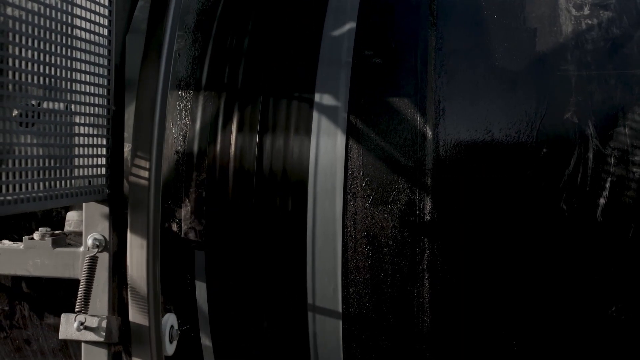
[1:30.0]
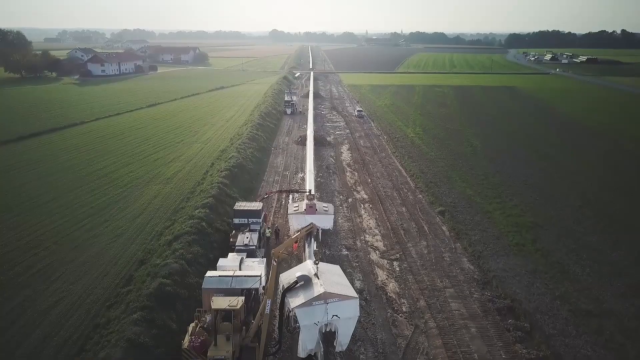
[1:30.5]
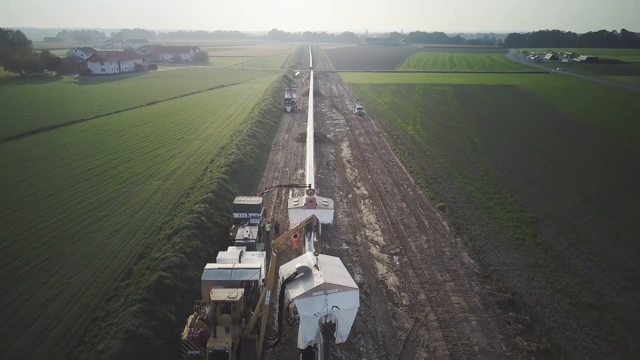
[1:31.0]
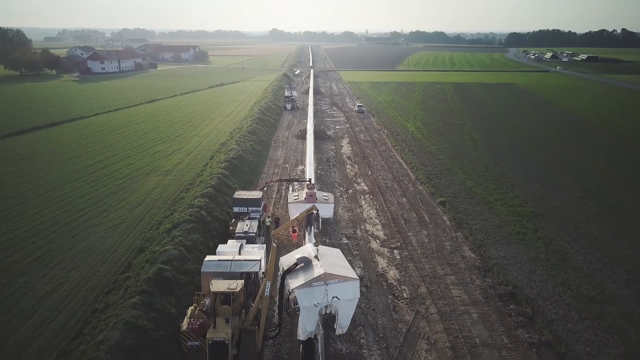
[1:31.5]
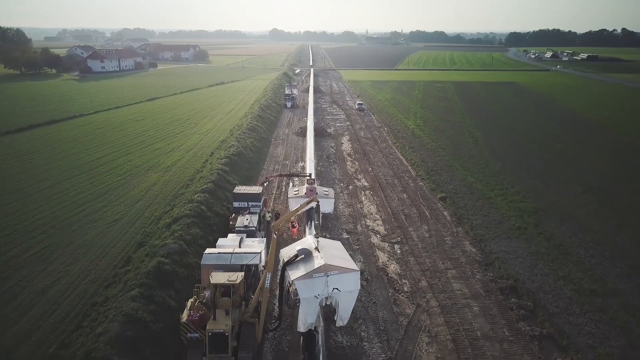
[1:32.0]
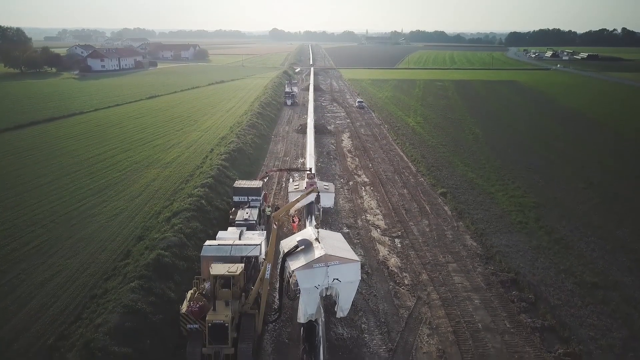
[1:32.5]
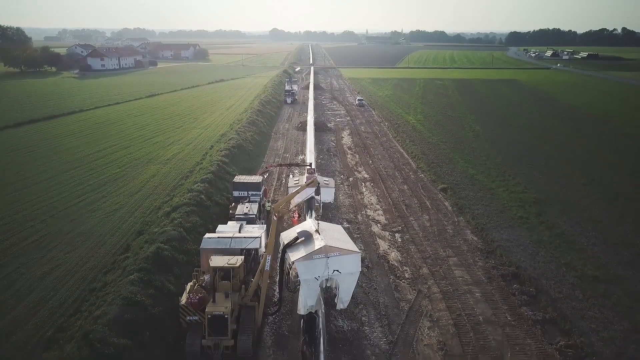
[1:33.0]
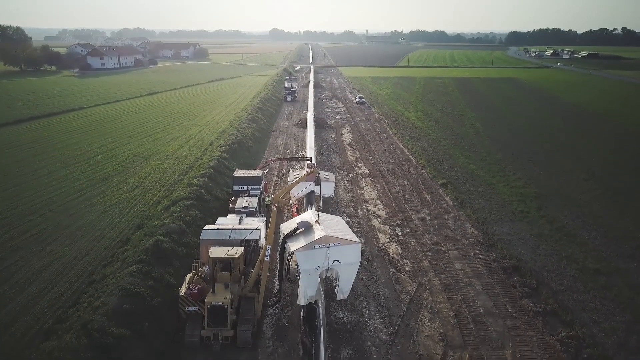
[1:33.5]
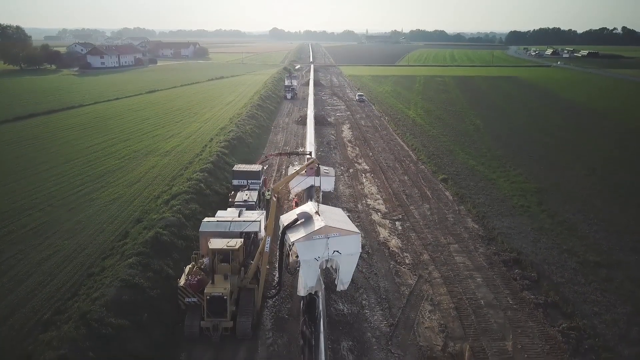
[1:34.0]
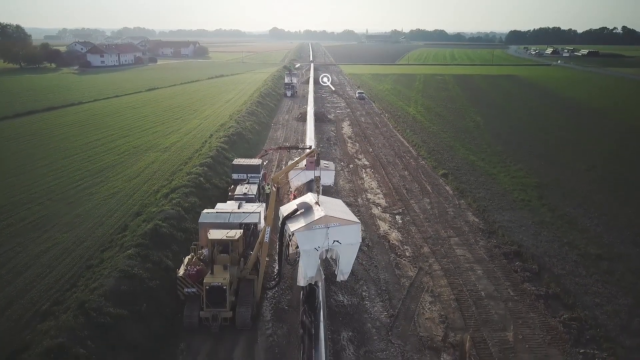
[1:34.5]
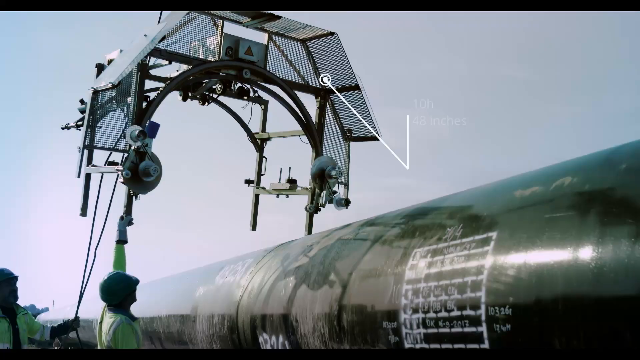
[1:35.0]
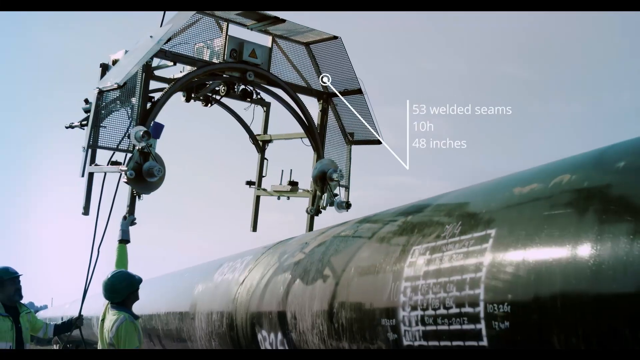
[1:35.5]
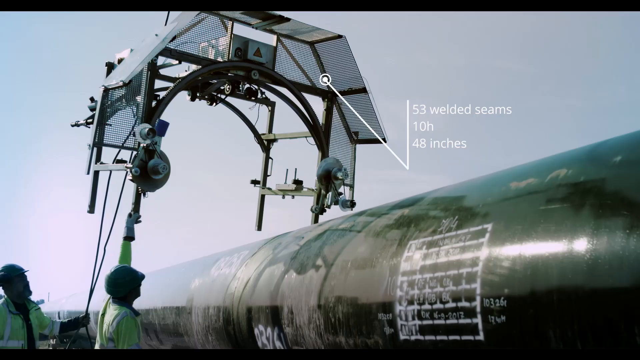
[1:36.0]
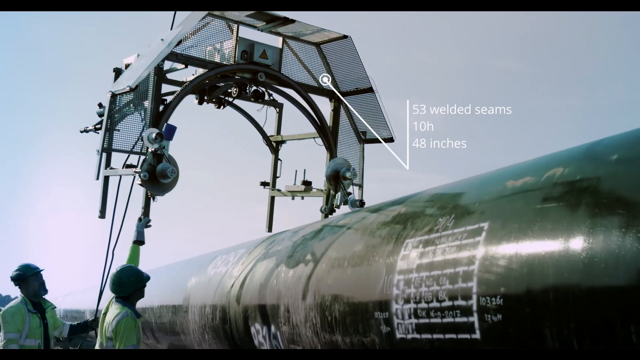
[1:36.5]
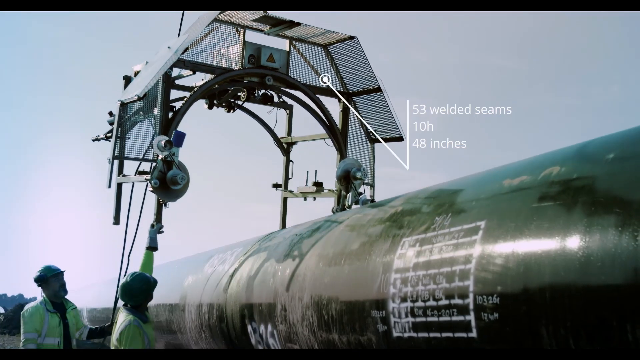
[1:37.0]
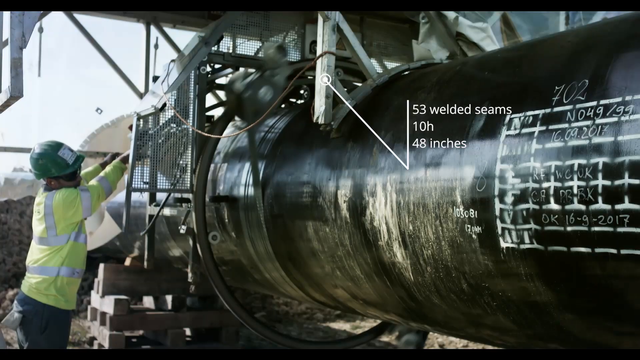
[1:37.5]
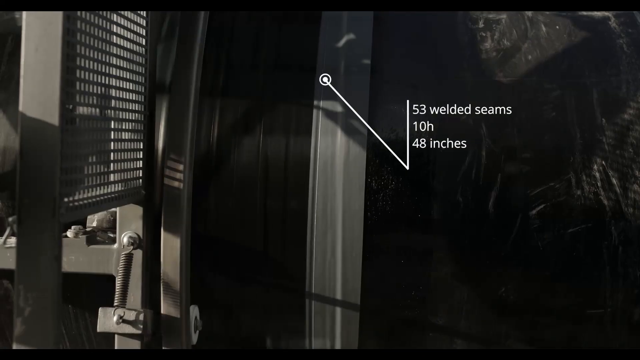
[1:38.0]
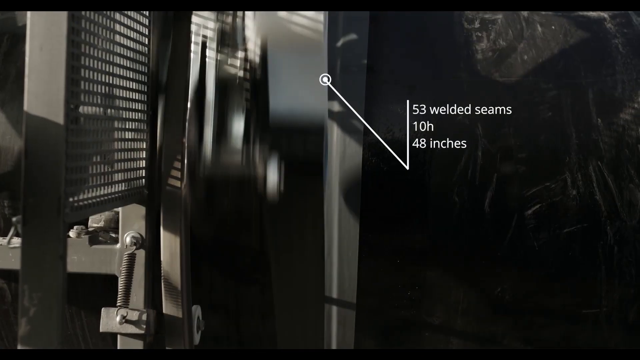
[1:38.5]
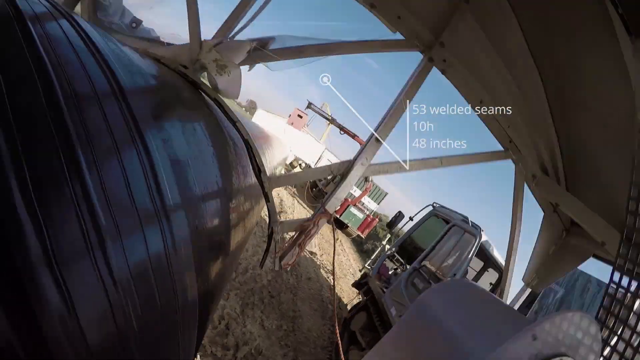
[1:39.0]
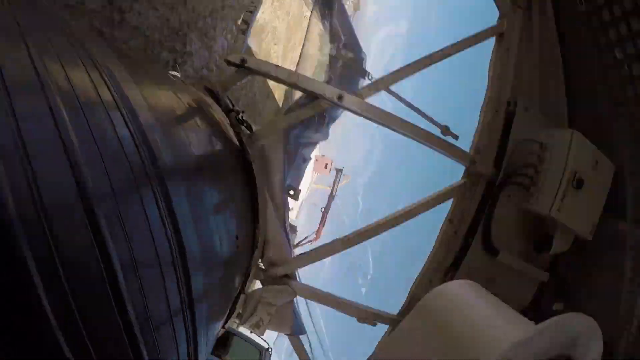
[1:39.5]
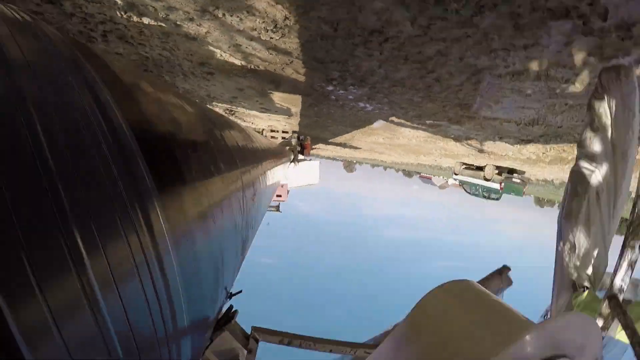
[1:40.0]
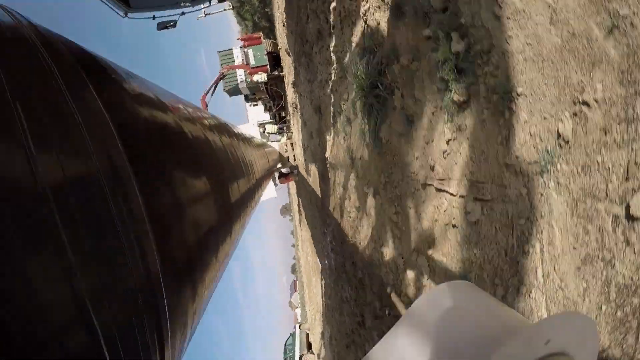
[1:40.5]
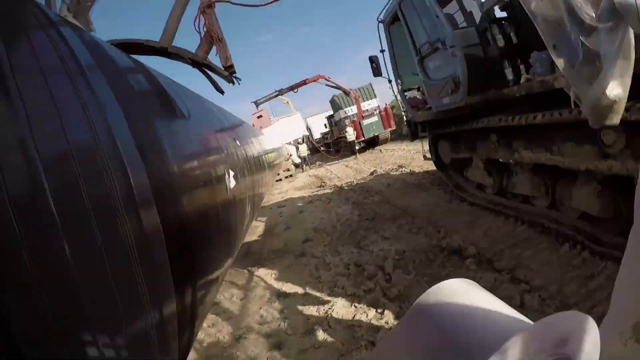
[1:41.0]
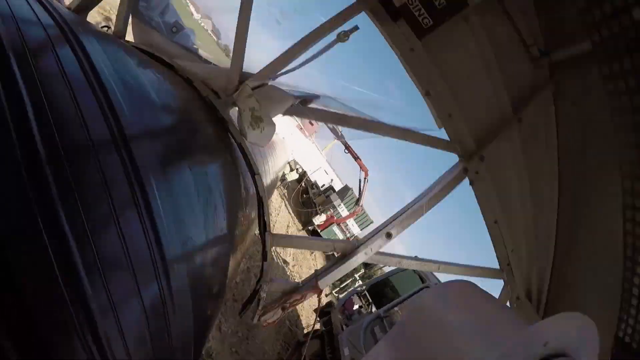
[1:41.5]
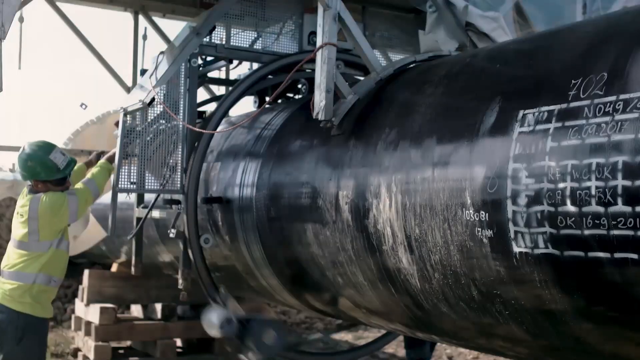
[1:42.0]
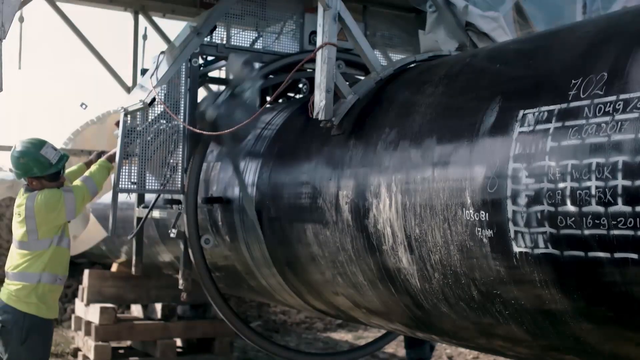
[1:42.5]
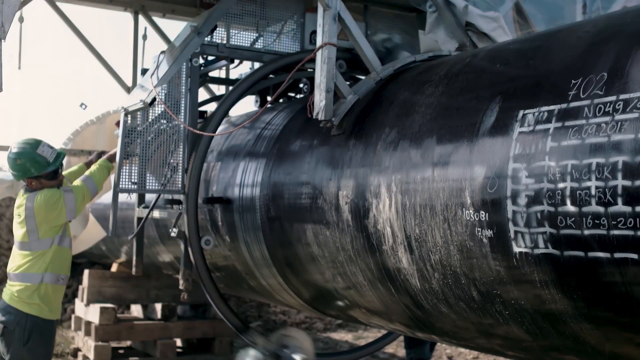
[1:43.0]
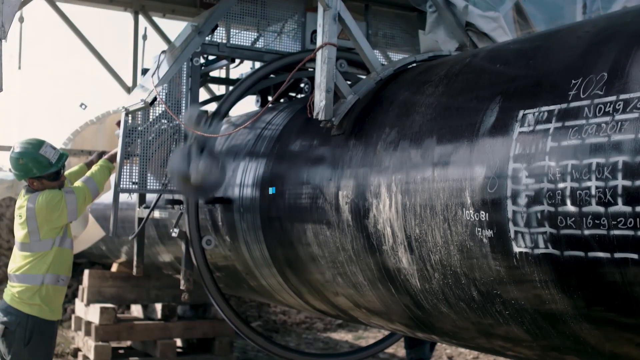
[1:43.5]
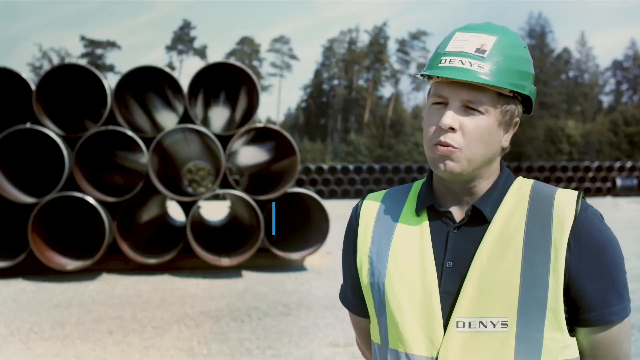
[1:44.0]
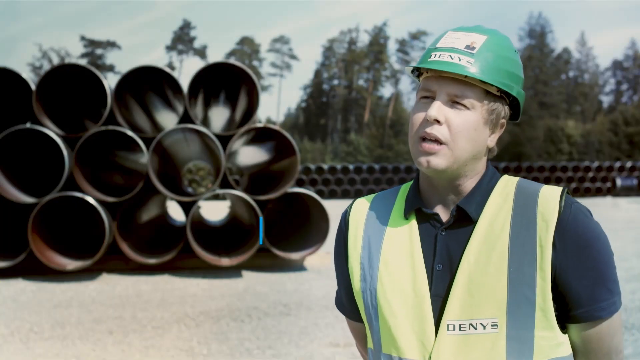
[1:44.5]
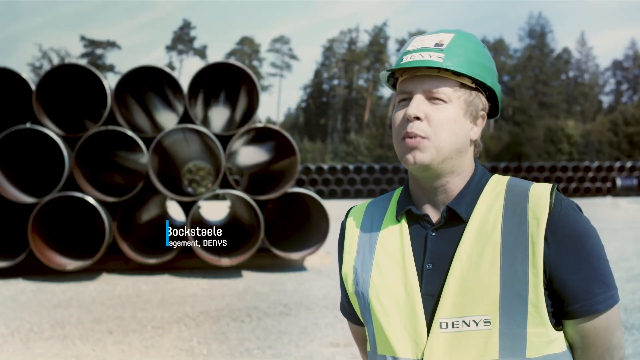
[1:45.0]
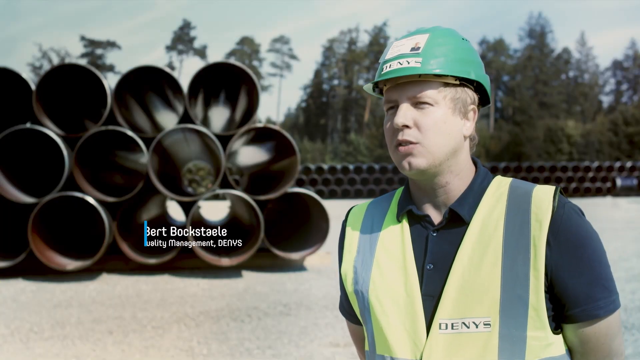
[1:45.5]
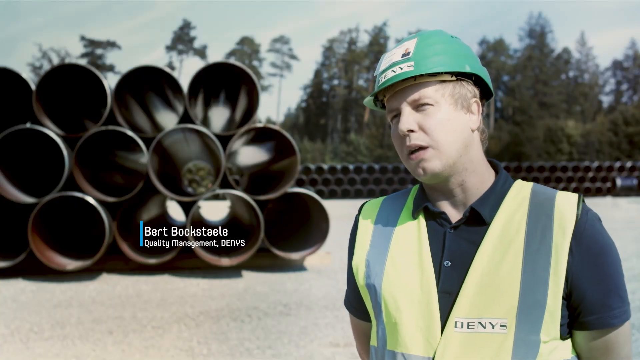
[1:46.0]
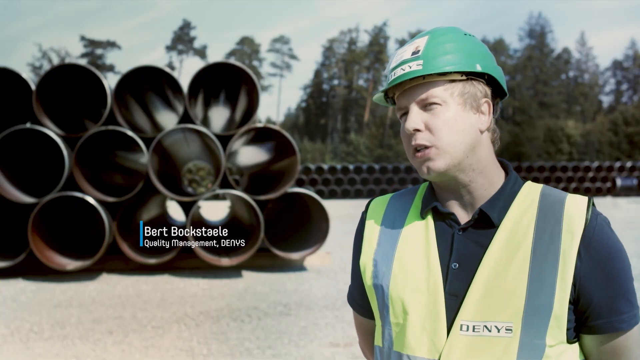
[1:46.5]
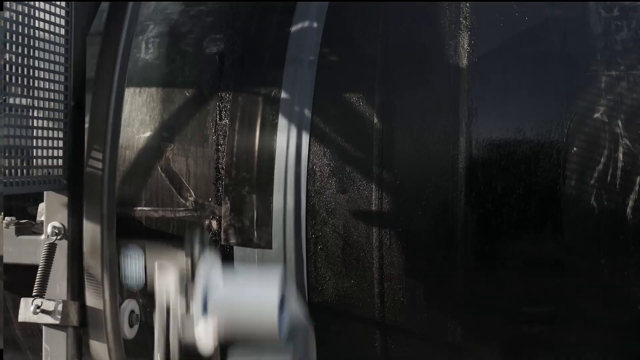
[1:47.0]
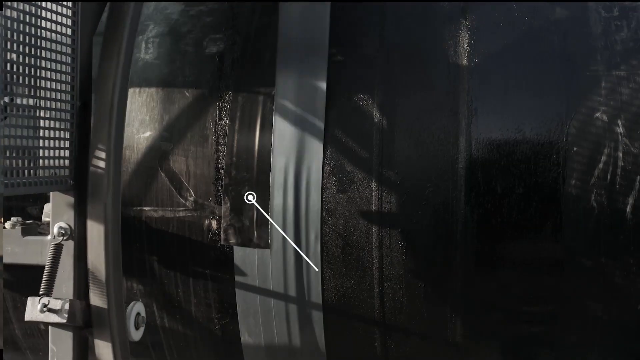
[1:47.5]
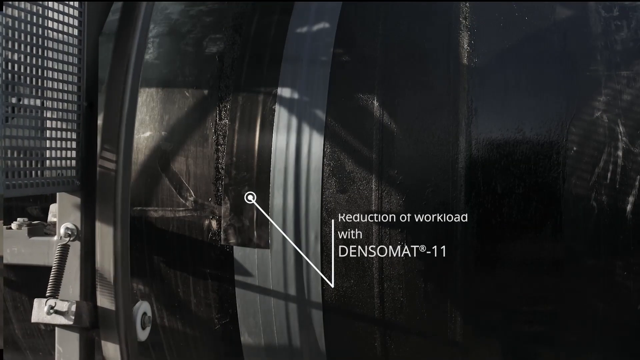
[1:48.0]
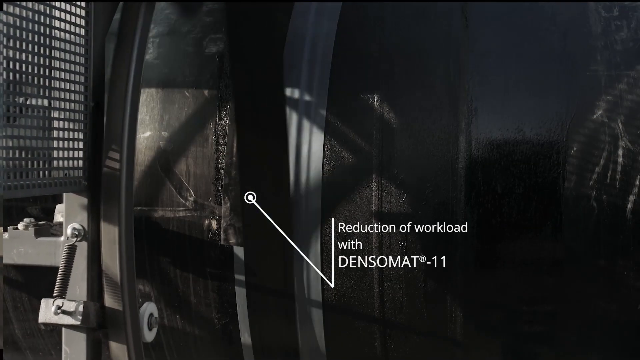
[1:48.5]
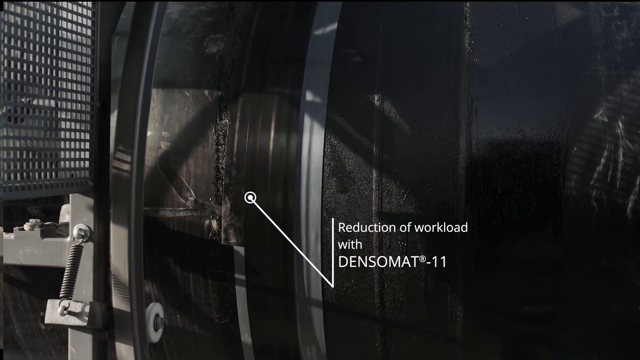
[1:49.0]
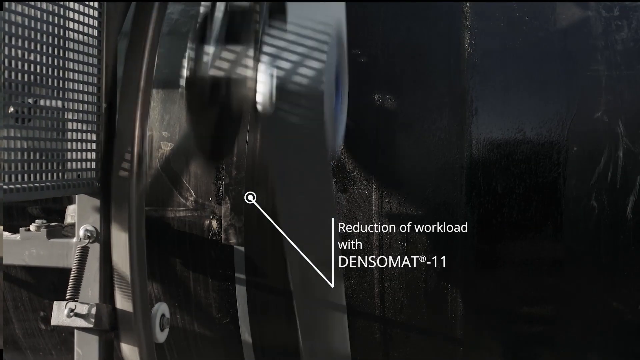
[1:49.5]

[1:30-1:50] Close-up gears work on a pipeline. In the countryside, long pathways of dirt have already been dug out for the pipeline, and construction vehicles are sitting there. An aerial view shows a cap hovering over a pipeline, about to be placed on top of it. A worker in a green hard hat and a reflective shirt works on a pipeline. A white arrow reads "53 welded seams, 10 hours, 48 inches." The gears keep turning, and the camera turns with them so the world appears upside down, almost as if the camera were attached to the wheel. A man named Berksdale talks. A close-up shows the turning wheel and the gears engaging, and a white sign says something about the gears.